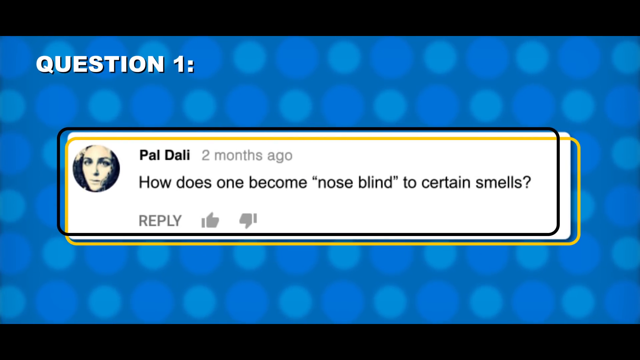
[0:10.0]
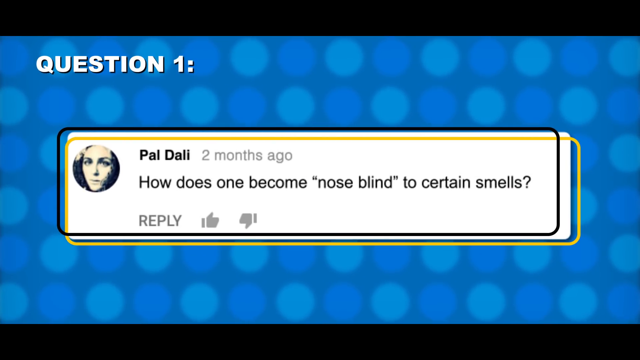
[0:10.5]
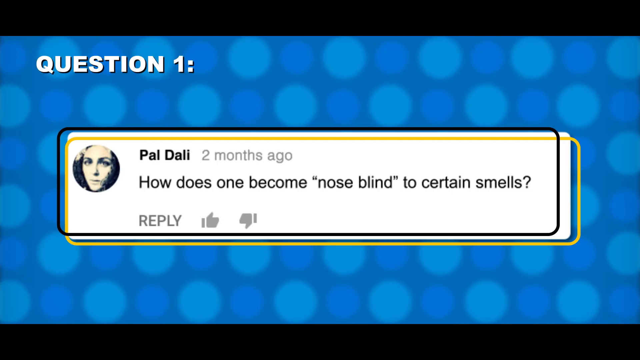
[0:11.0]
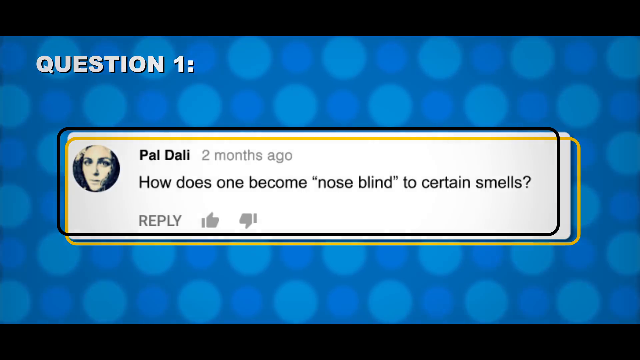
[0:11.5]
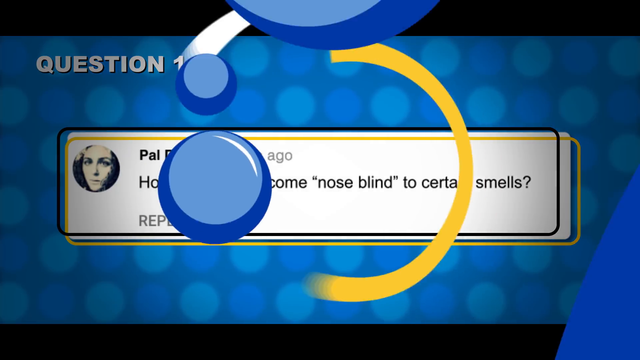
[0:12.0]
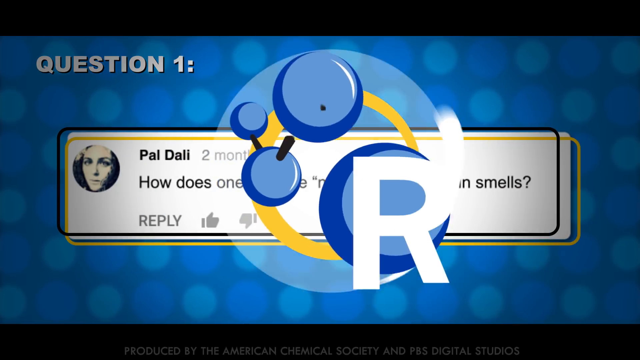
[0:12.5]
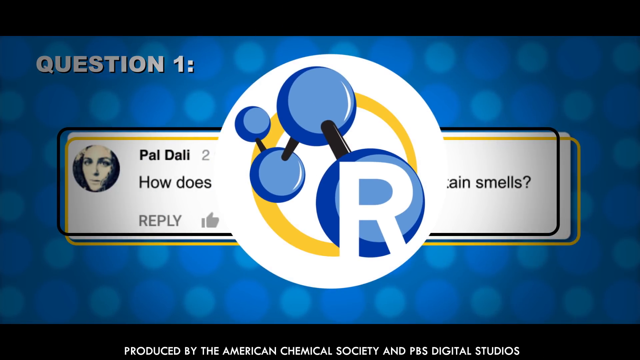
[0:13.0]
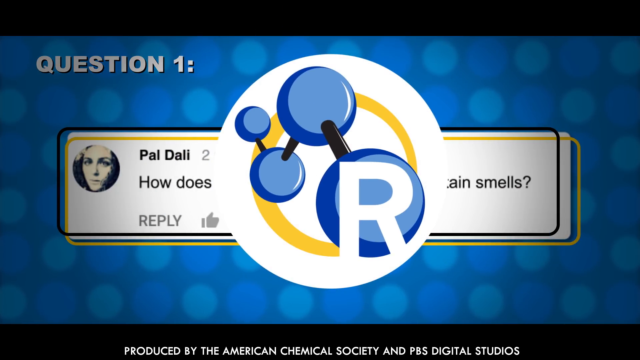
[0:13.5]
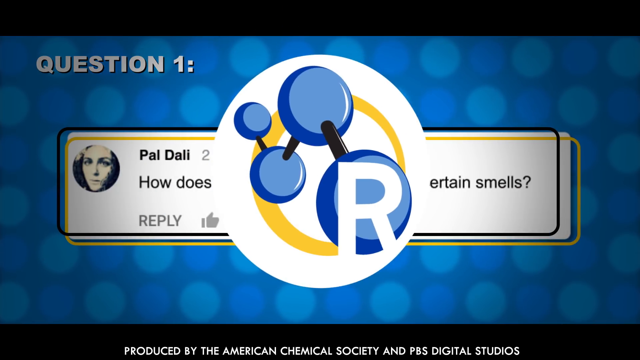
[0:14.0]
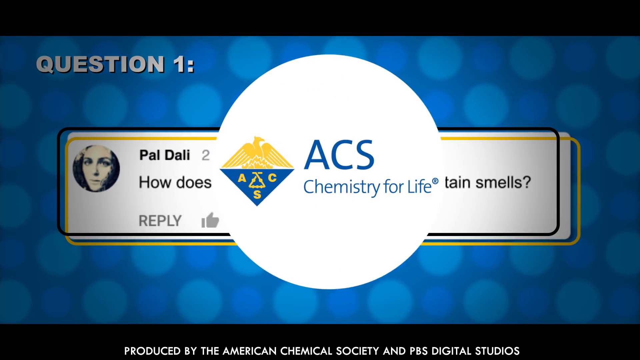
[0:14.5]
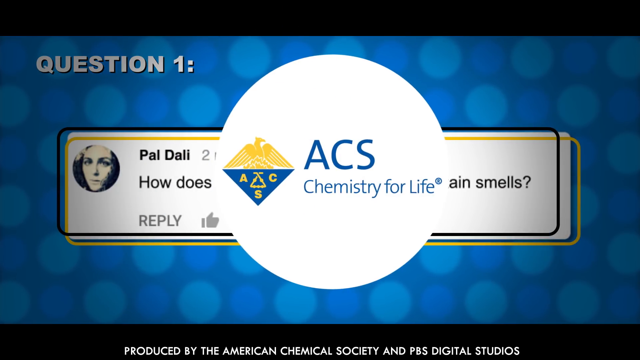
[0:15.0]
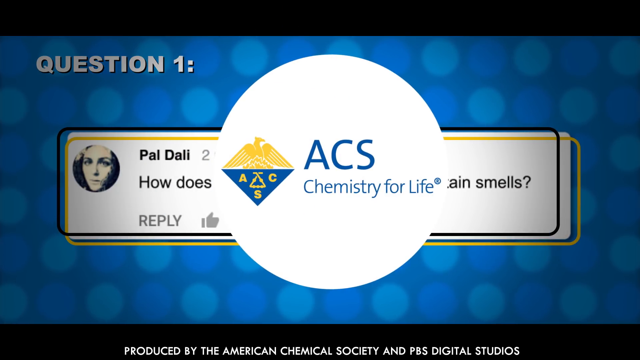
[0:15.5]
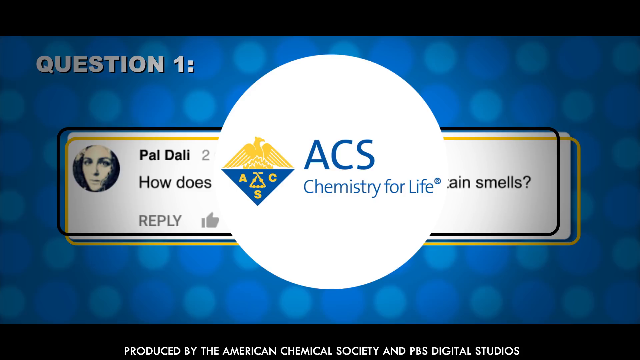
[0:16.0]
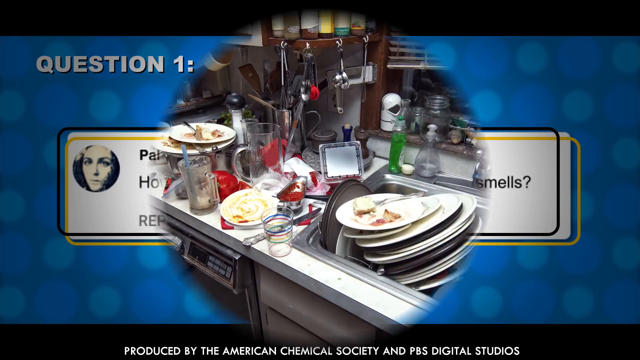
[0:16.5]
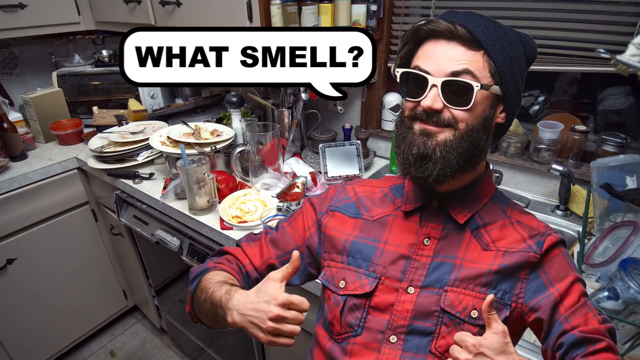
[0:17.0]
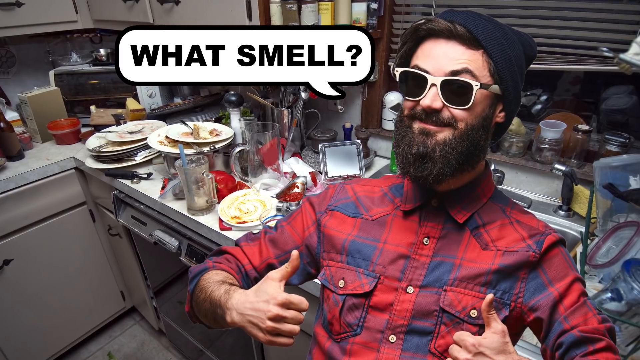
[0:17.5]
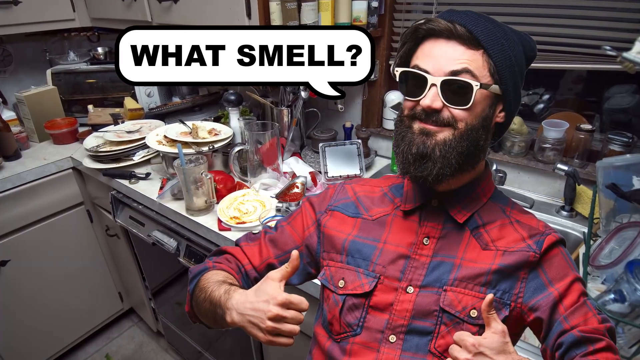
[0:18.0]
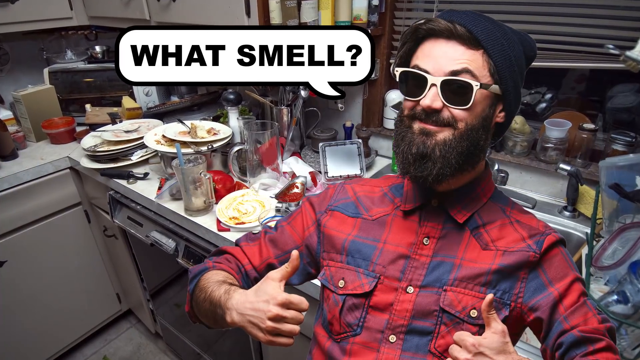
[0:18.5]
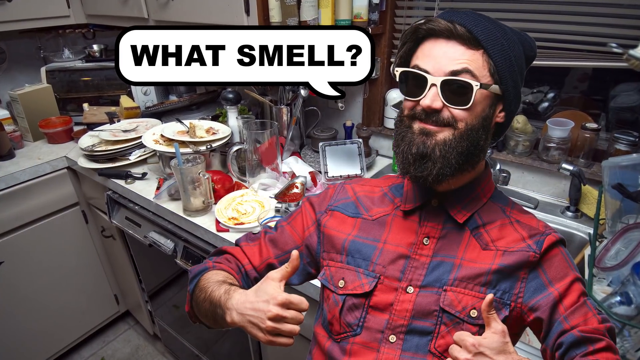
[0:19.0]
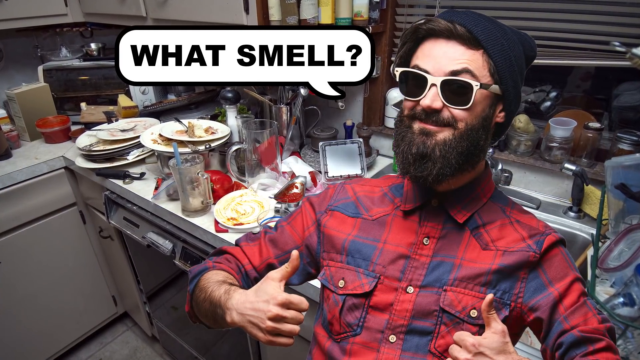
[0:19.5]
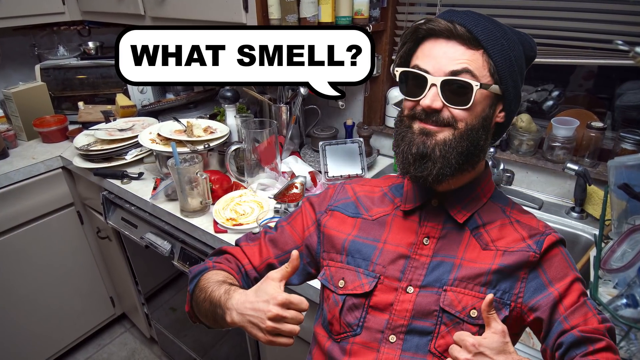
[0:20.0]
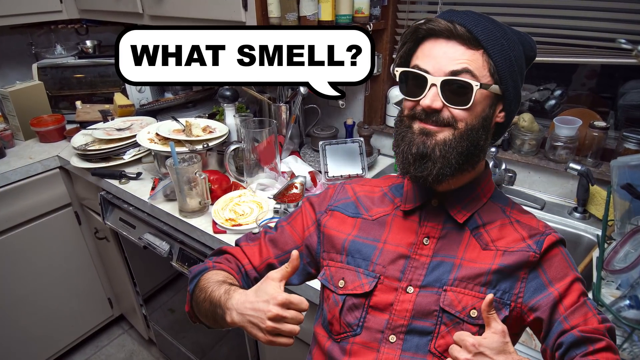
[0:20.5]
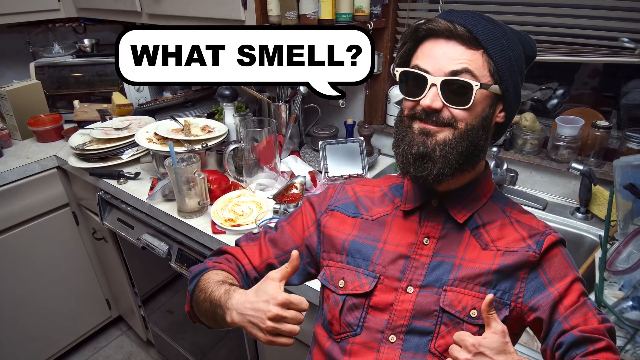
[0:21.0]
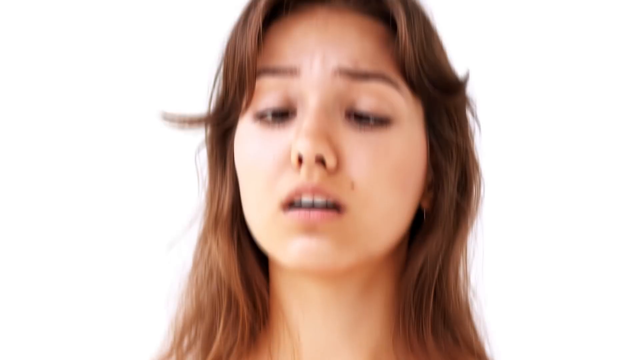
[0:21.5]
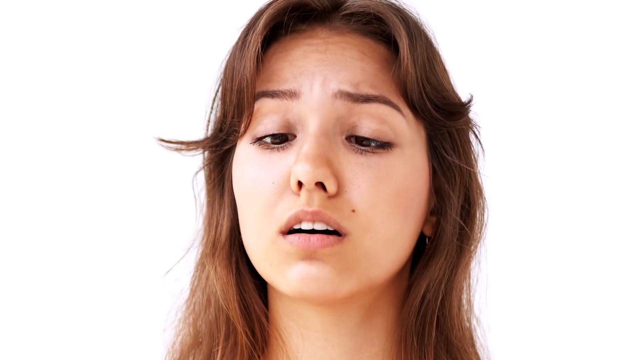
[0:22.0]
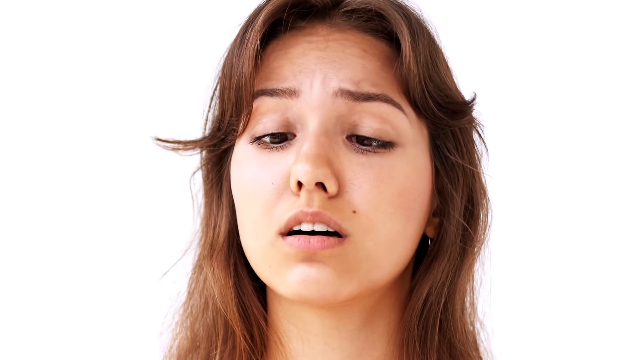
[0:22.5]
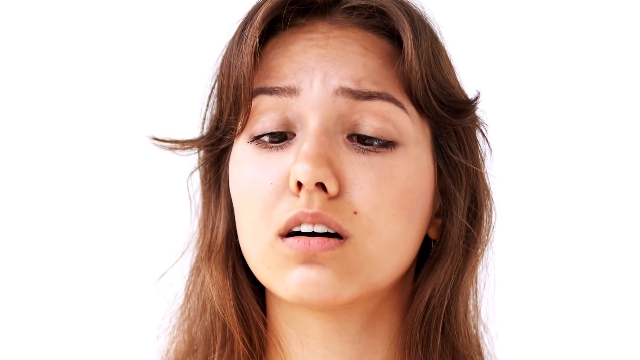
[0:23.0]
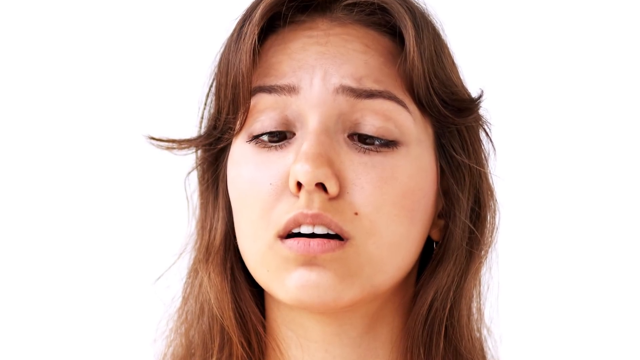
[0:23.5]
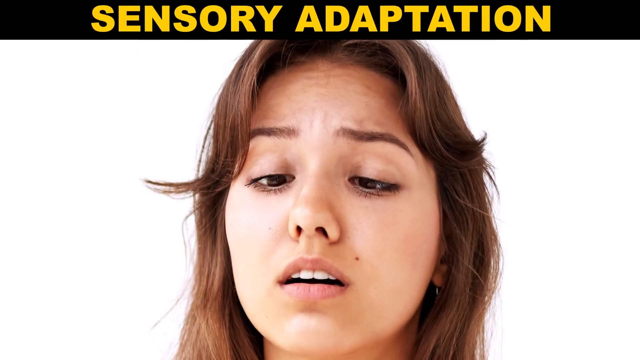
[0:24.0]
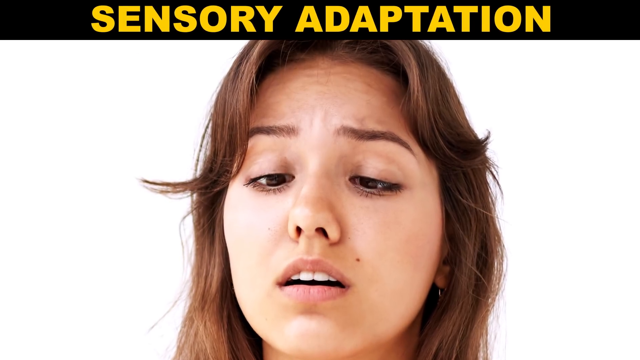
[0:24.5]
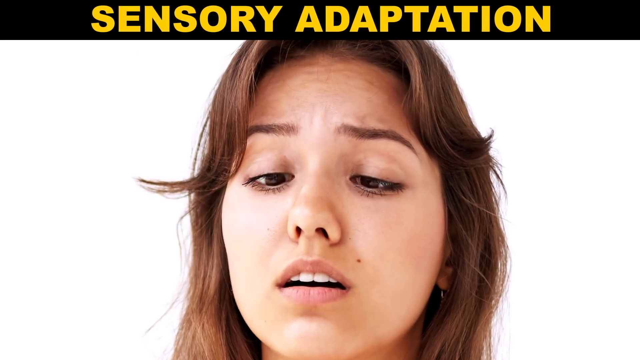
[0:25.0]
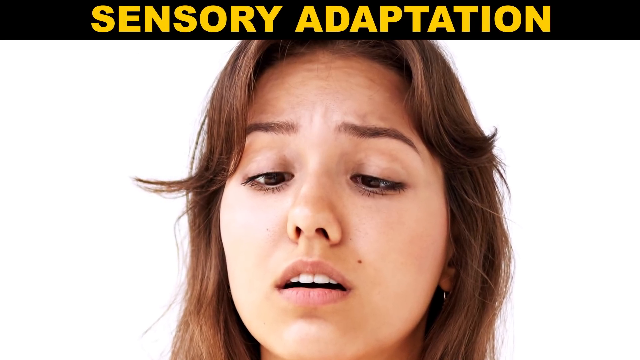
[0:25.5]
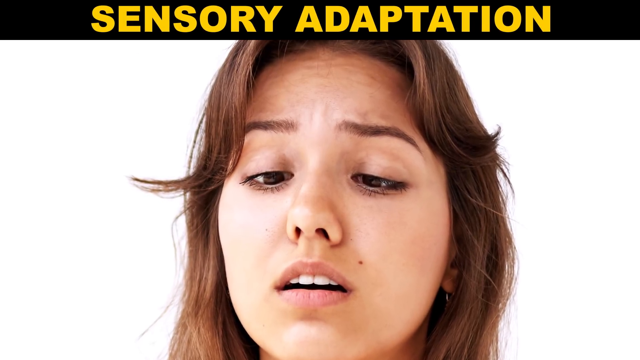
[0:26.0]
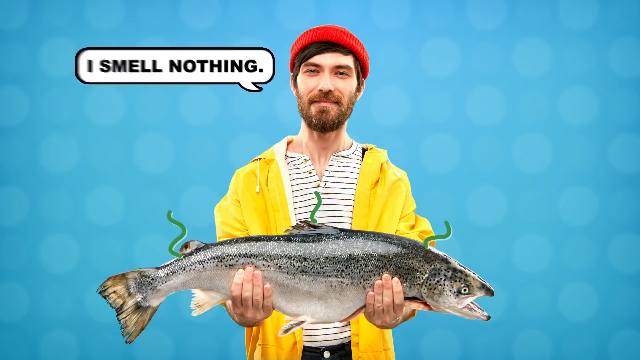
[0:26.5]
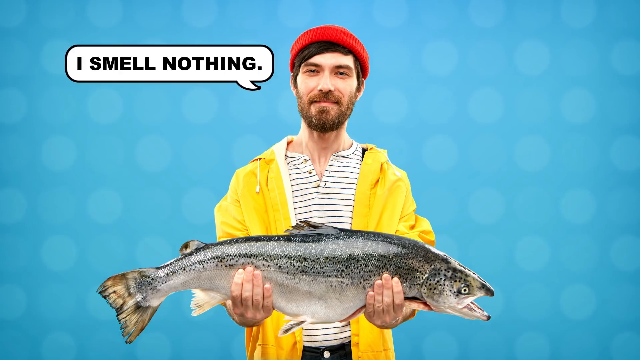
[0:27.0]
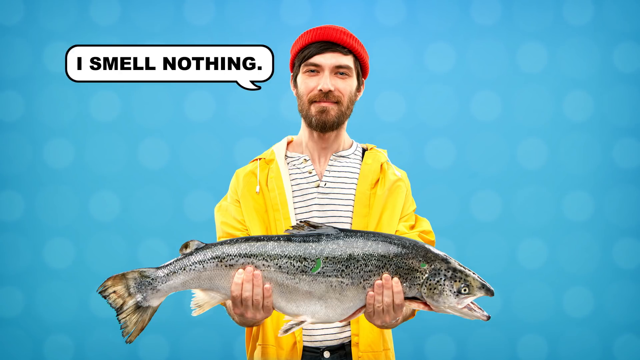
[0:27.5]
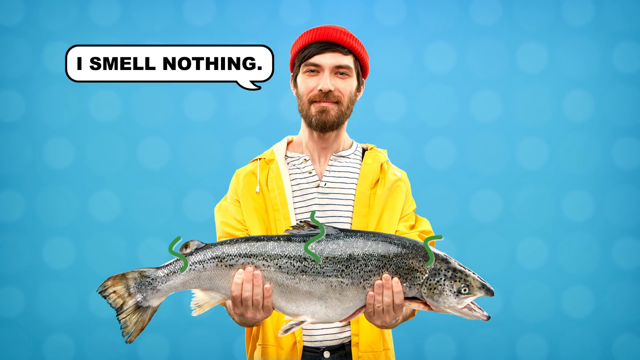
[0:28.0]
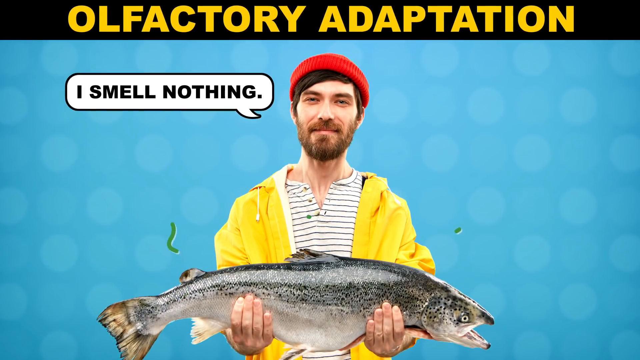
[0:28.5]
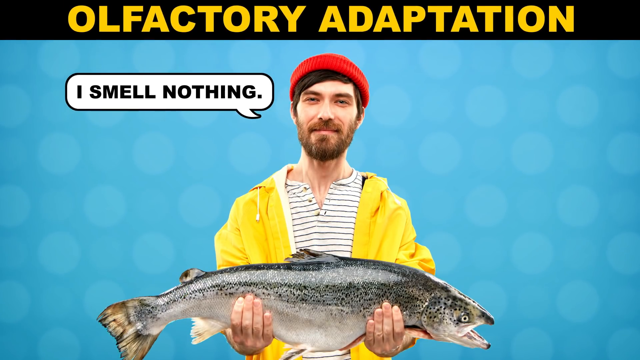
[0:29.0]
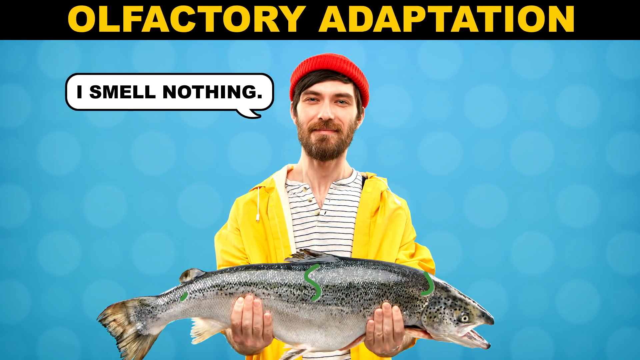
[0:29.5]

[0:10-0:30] The question on the screen, from Hal Dally, reads "How does one become nose blind to certain smells?" At the top, white text says "question number one". The background is blue with lighter blue and darker blue circles throughout. A logo appears in the center: a picture of an atom with a big R on the front. The circle logo spins, and on the back it says "ACS, Chemistry for Life". A new screen shows a man in a plaid collared shirt, a beanie hat and sunglasses, with a text bubble by his face that says "what smell?" Behind him is an extremely dirty kitchen, with dishes piled up on the countertops and an overflowing sink. Next, a woman appears; she has a middle part, with bangs kind of flying off to the side of her forehead. She has a distressed look on her face, and her eyes look down at her nose. Text appears at the top: "Sensory Adaptation".